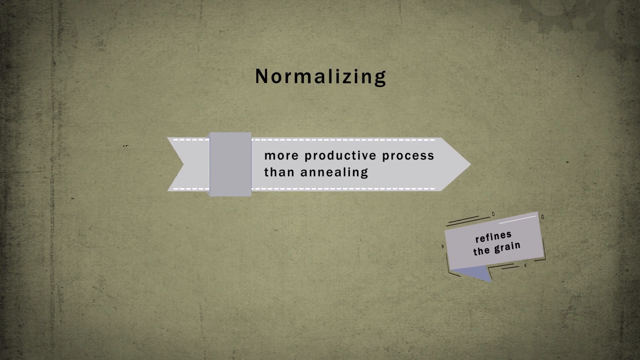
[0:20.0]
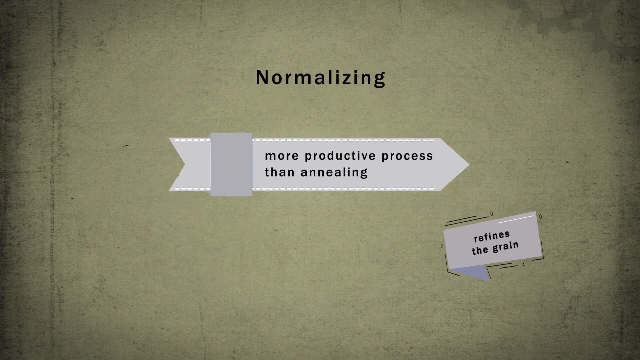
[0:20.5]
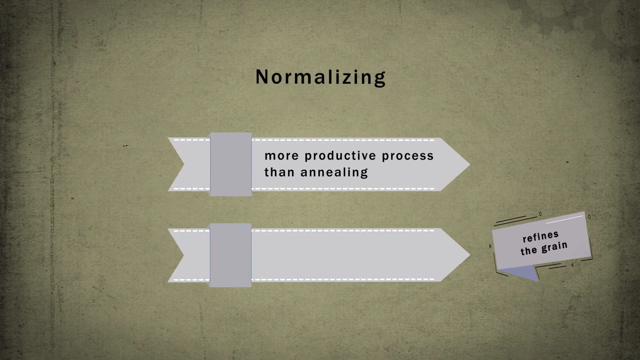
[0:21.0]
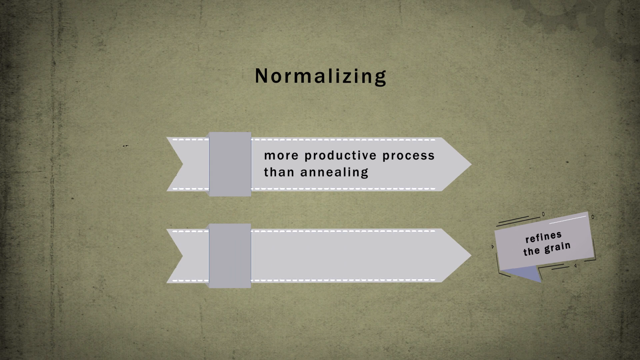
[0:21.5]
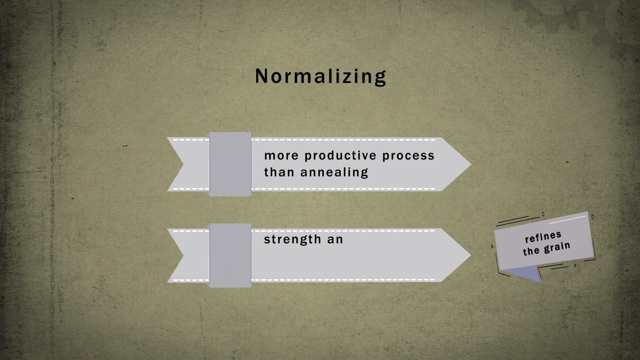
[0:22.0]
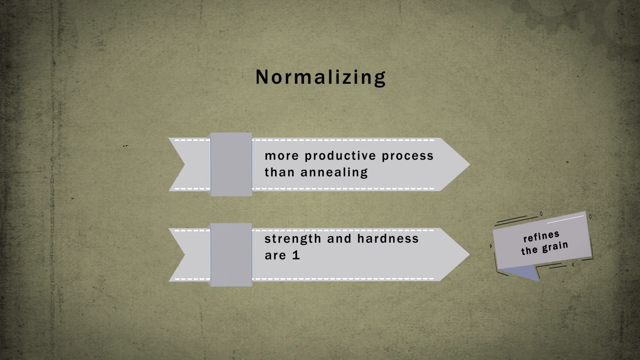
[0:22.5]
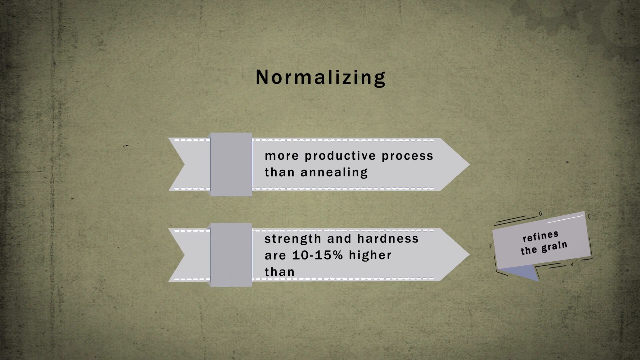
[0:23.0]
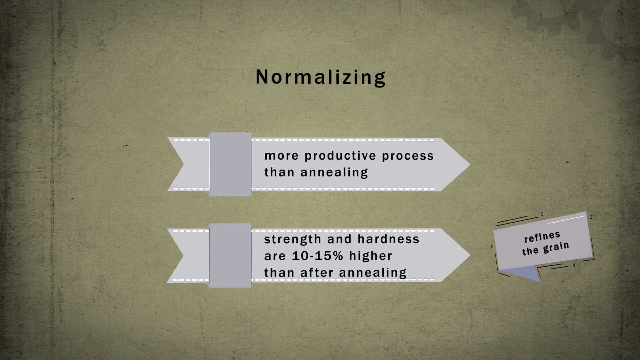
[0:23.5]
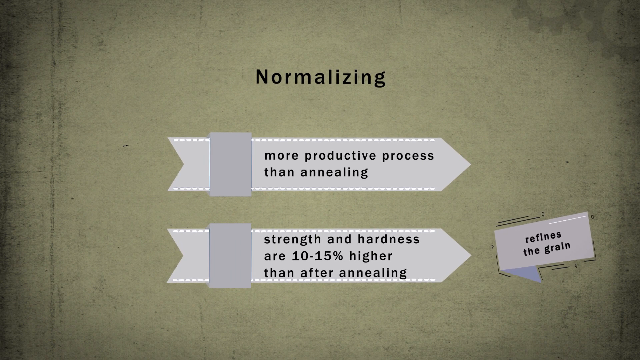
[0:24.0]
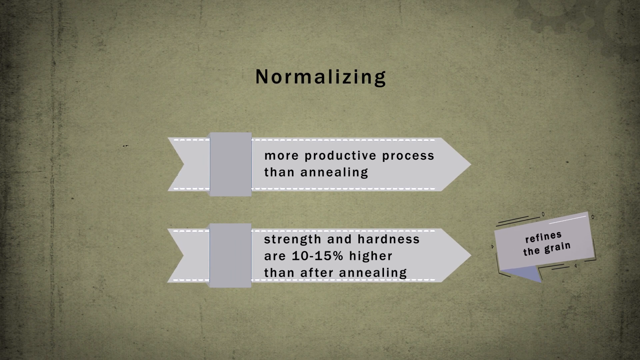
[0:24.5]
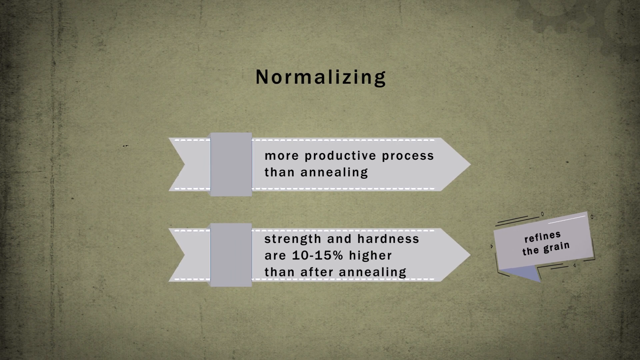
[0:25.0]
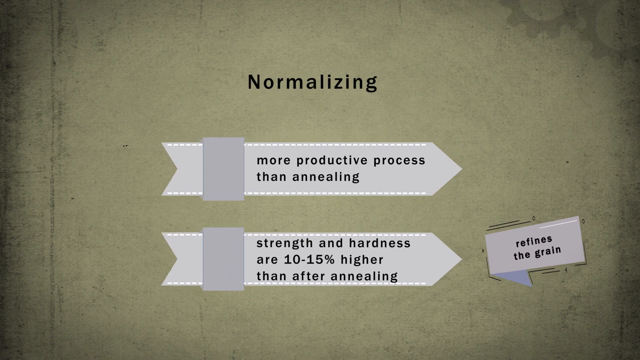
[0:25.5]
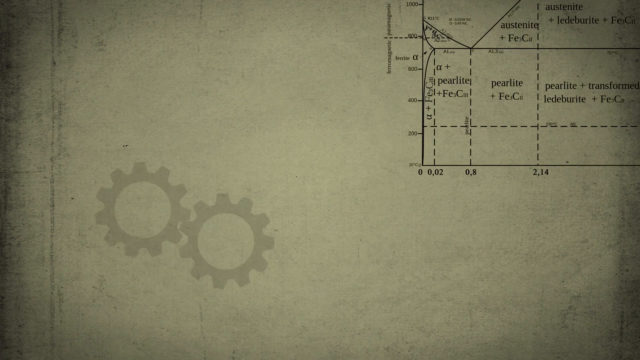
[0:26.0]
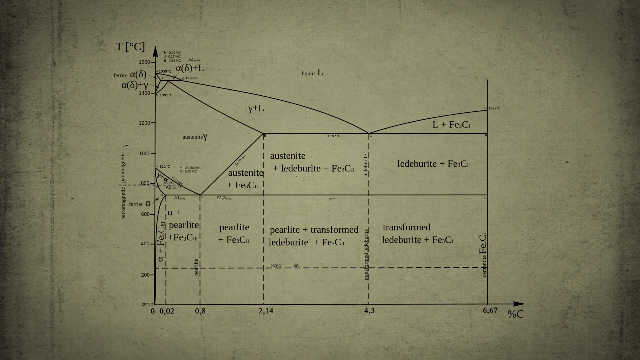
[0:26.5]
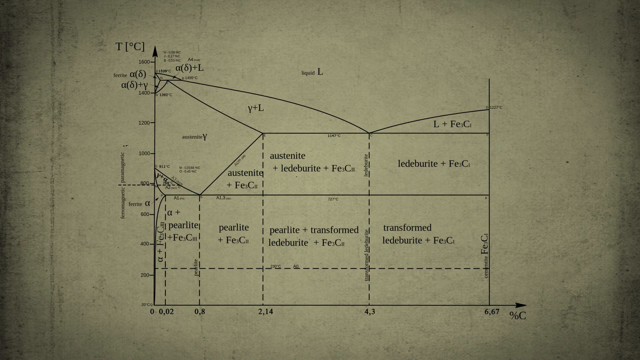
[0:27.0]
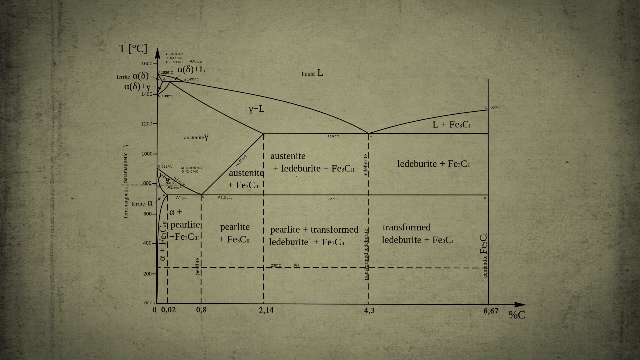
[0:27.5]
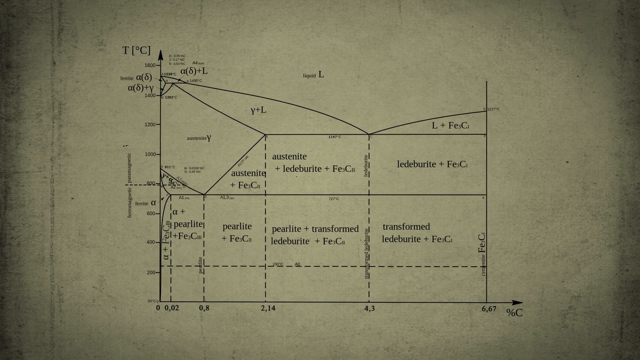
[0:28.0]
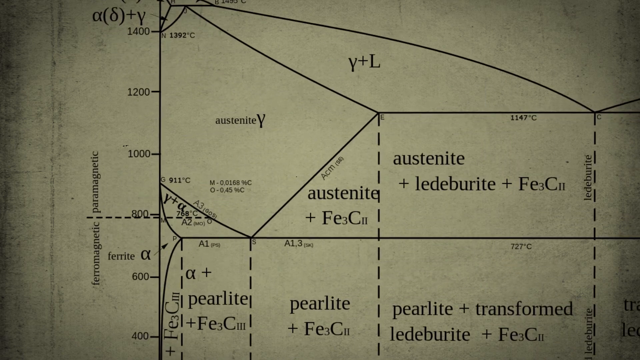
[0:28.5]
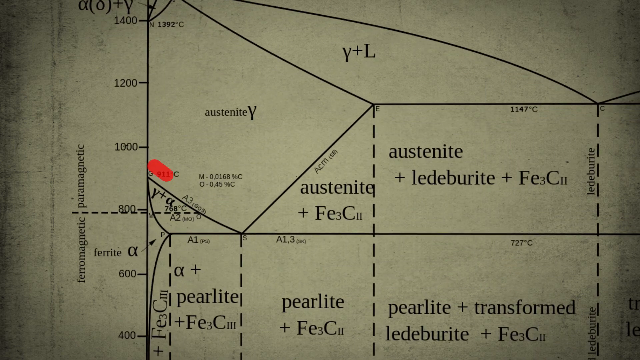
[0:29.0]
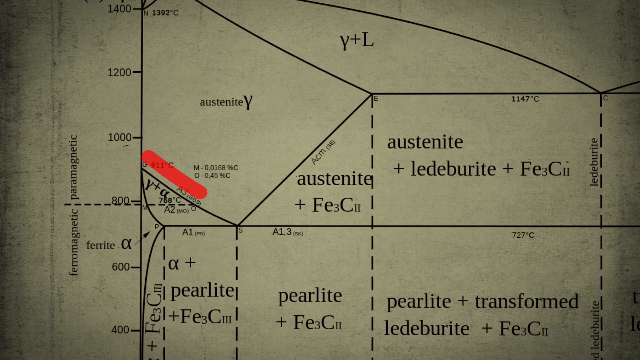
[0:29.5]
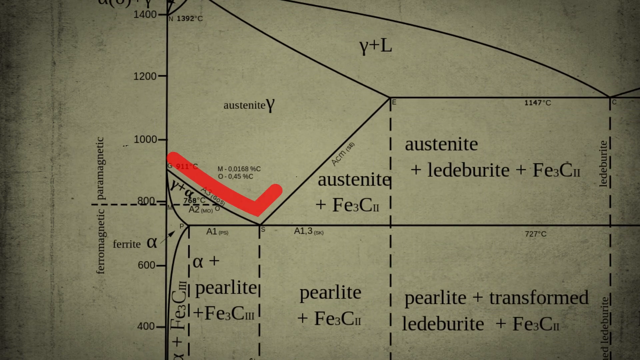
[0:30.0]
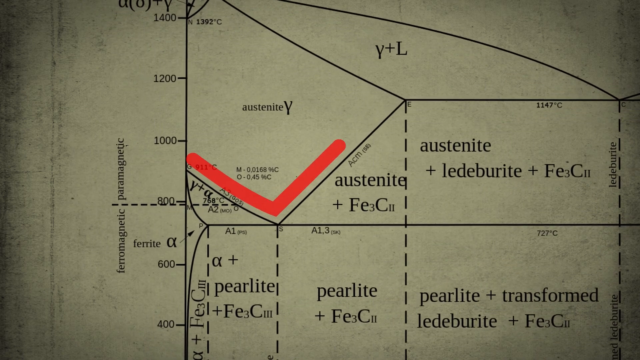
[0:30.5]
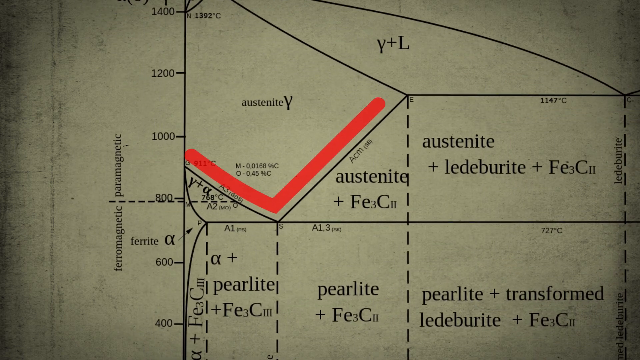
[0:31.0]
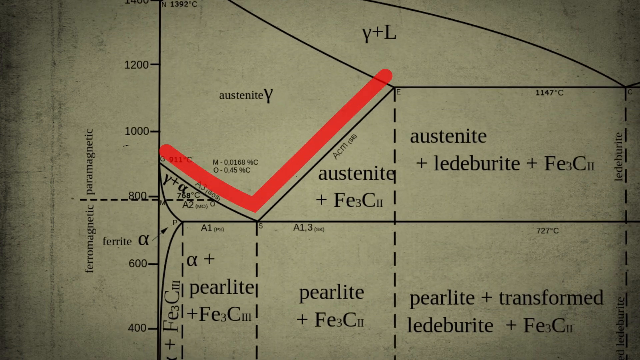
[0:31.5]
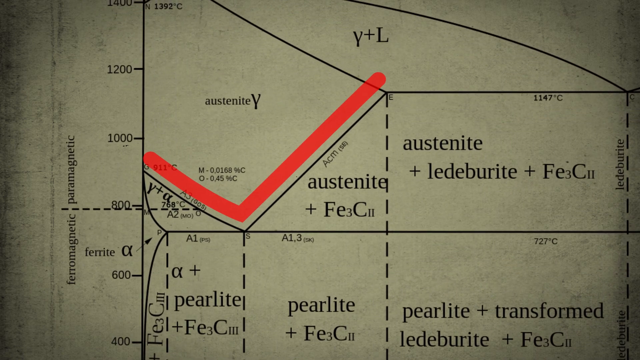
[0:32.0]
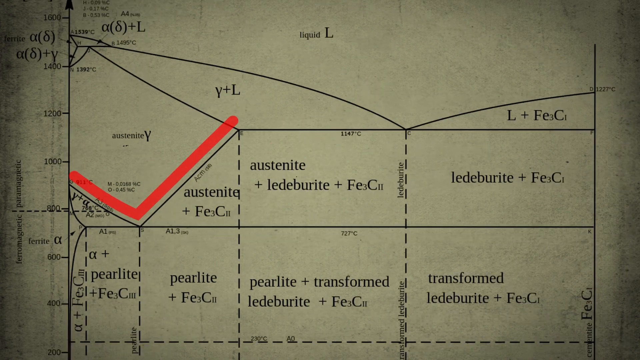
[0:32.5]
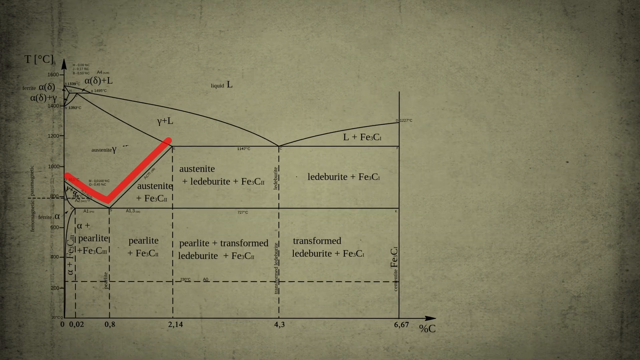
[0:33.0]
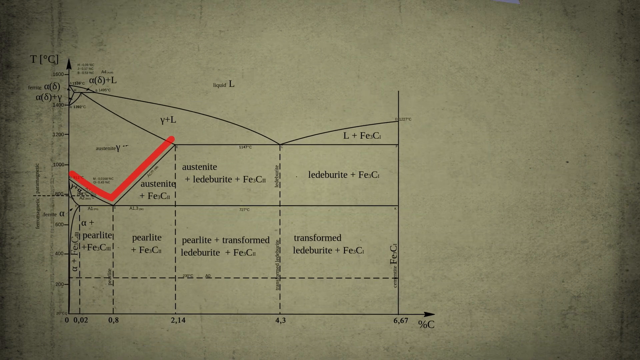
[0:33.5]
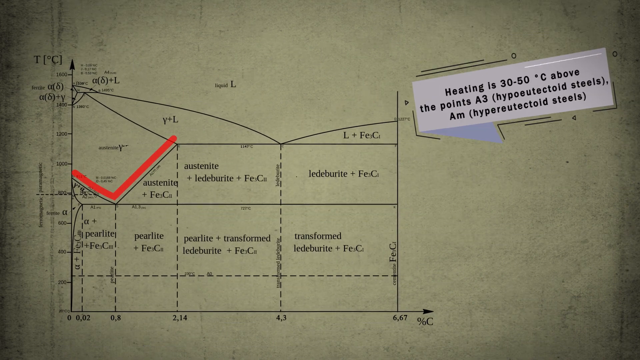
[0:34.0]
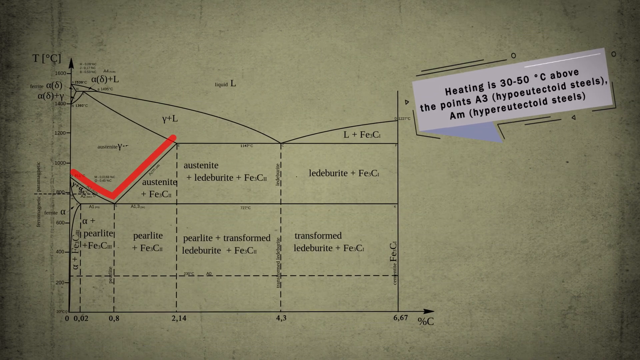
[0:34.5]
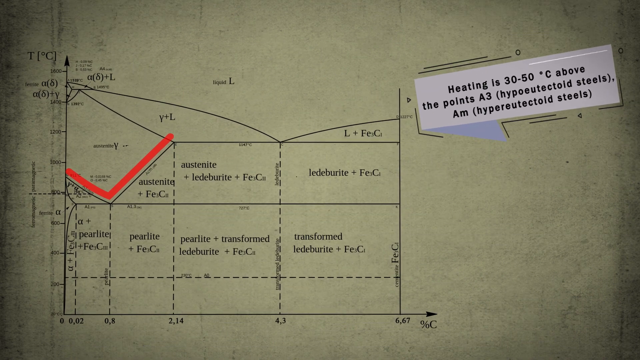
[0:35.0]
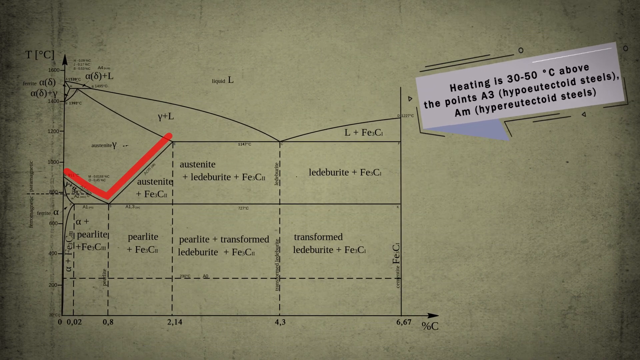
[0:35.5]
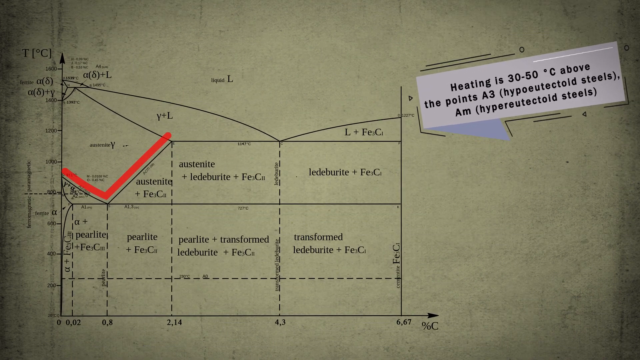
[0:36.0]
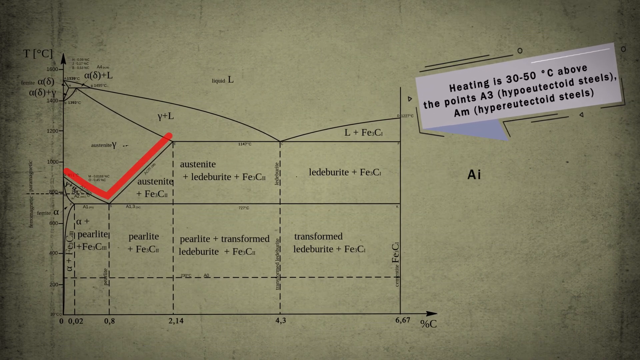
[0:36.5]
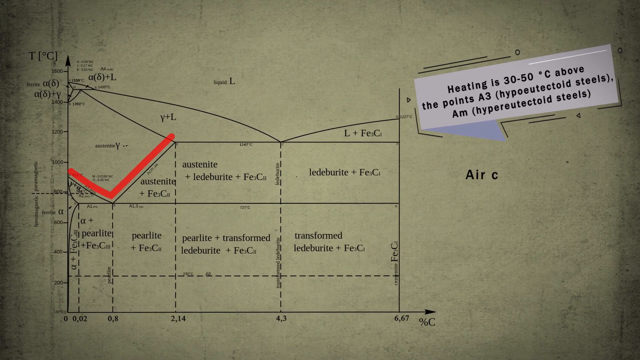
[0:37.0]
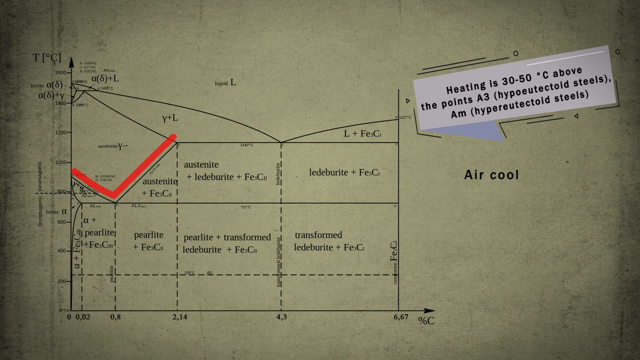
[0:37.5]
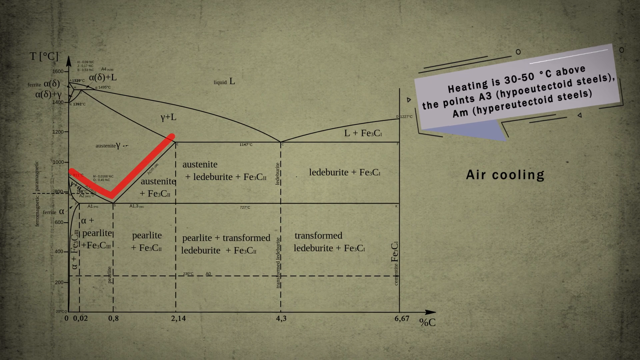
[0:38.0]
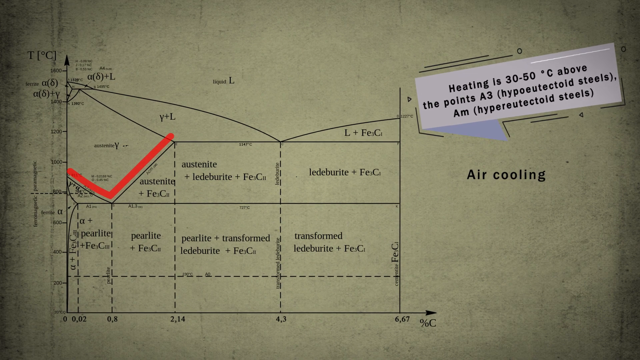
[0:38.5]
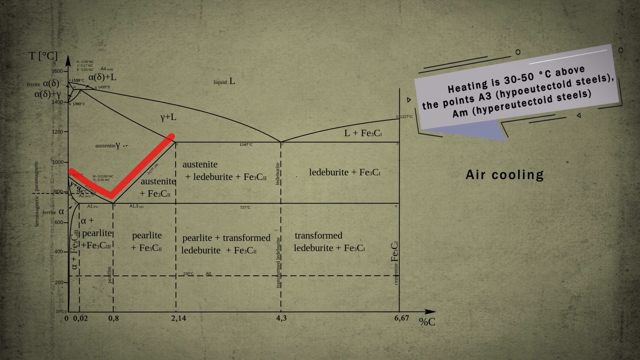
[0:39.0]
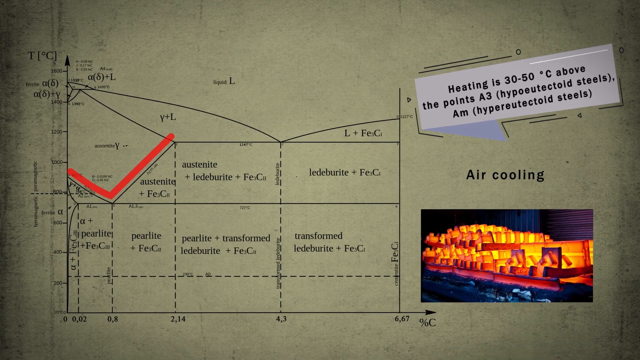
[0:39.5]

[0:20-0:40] "normalizing" is shown in black font, with "more productive process than annealing" in a grayish rectangle underneath it, and "refines the grain" in a small rectangle at the bottom right. Below that, another gray arrow appears. Then what seems to be some type of equation or graph chart pops up, with what appears to be an arrow or red line running through it to indicate various measurements. At the top right, another gray rectangular text box appears, and inside it black text reads "heating is 30 to 50 degrees celsius above the points of a3 (hypoeutectoid steels), Am (hypereutectoid)", followed by "air cooling". Then, at the bottom, an image pops up of what seems to be very hot, glowing orange material.